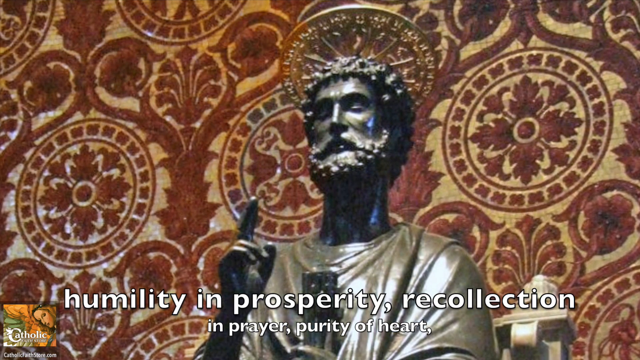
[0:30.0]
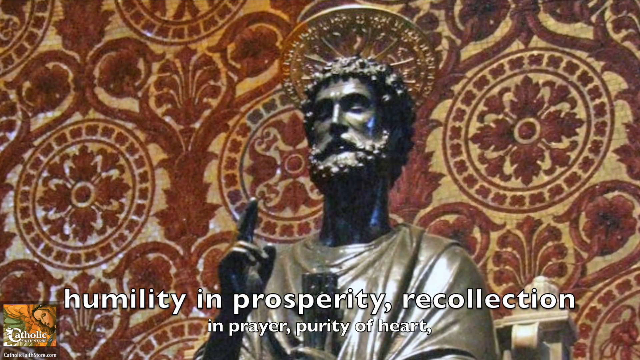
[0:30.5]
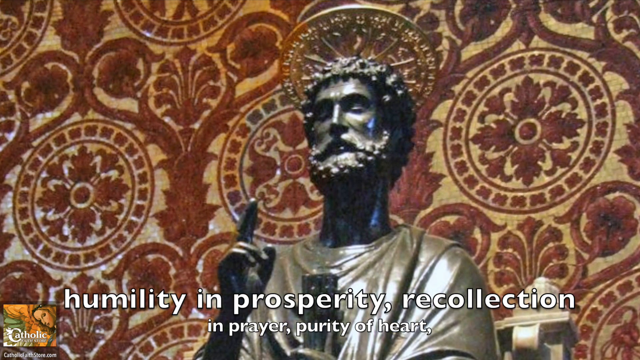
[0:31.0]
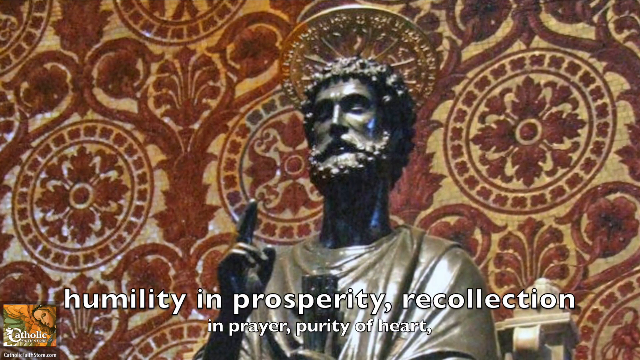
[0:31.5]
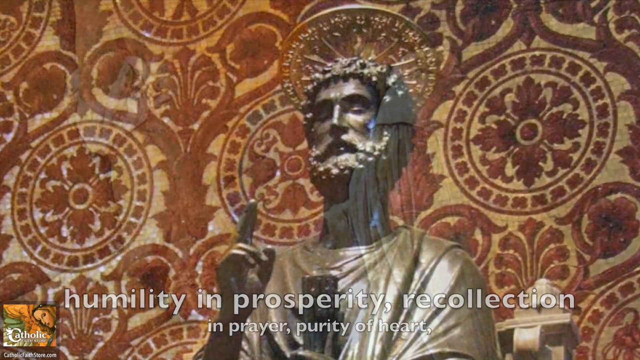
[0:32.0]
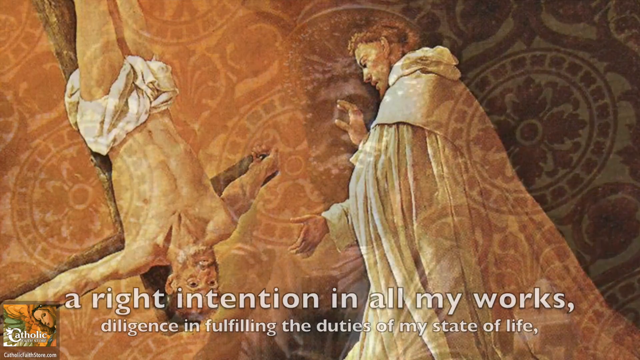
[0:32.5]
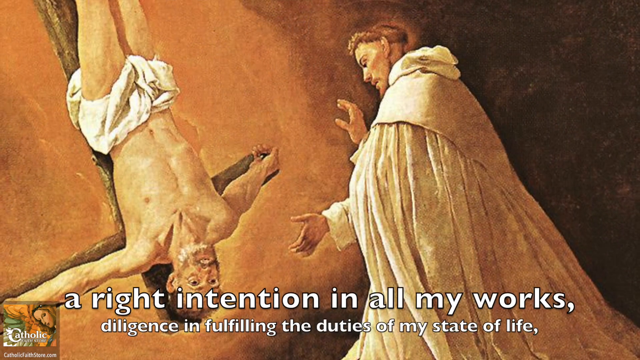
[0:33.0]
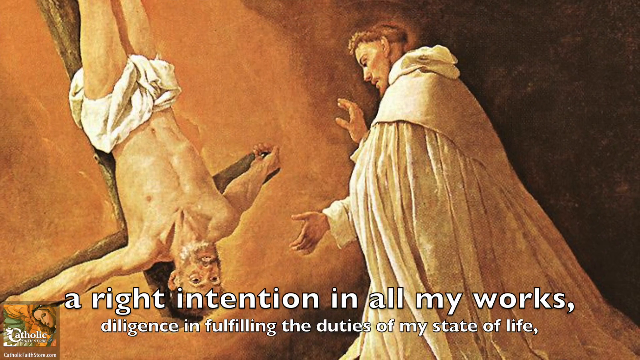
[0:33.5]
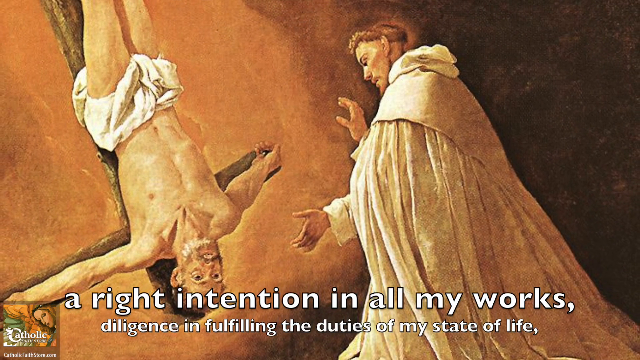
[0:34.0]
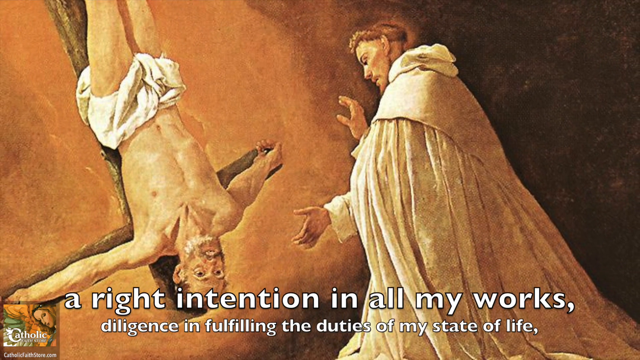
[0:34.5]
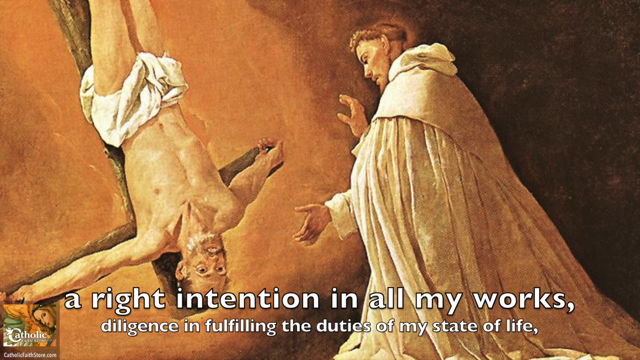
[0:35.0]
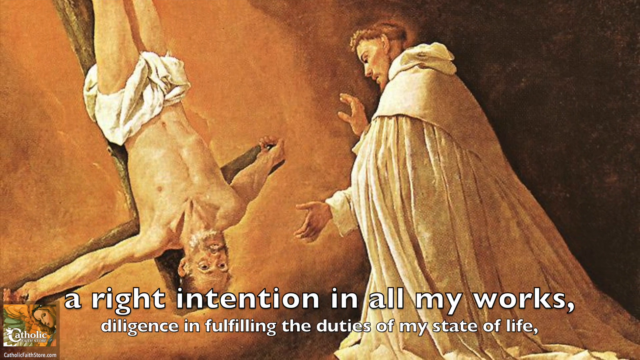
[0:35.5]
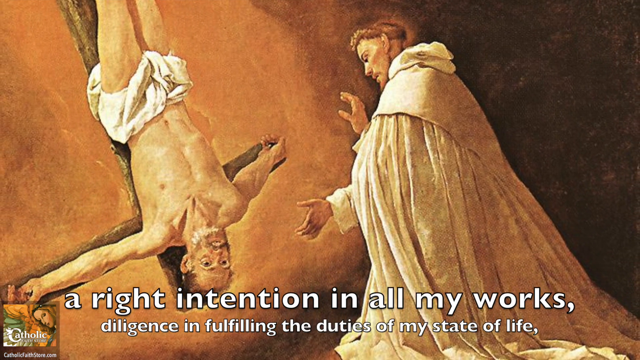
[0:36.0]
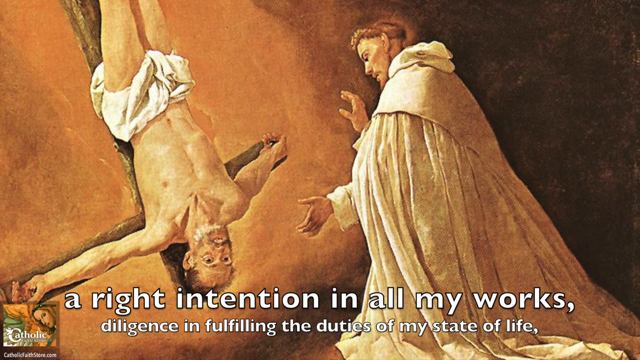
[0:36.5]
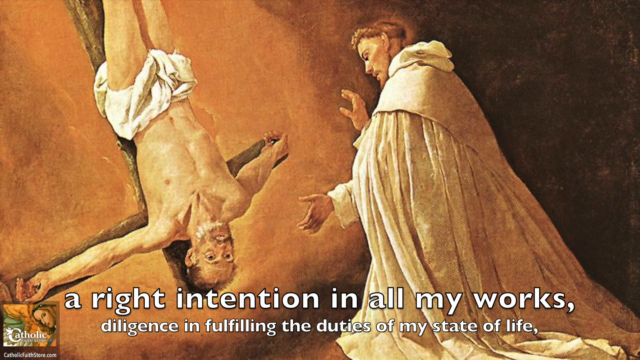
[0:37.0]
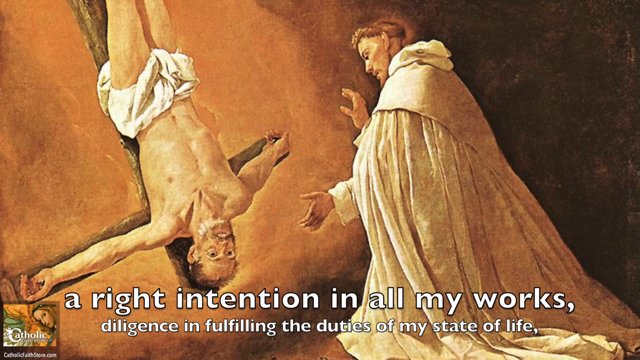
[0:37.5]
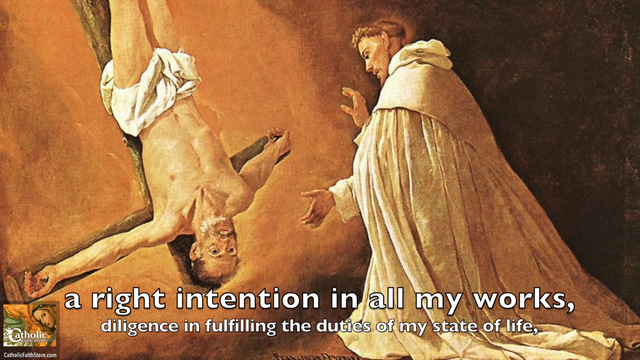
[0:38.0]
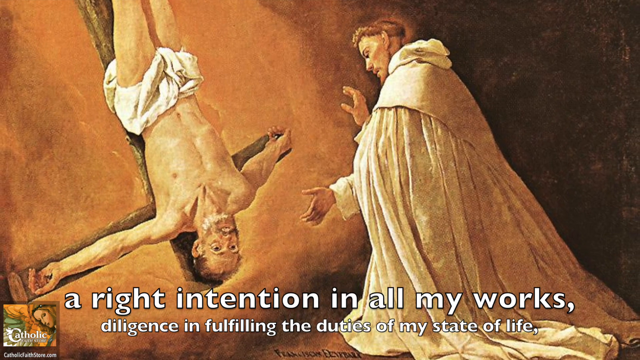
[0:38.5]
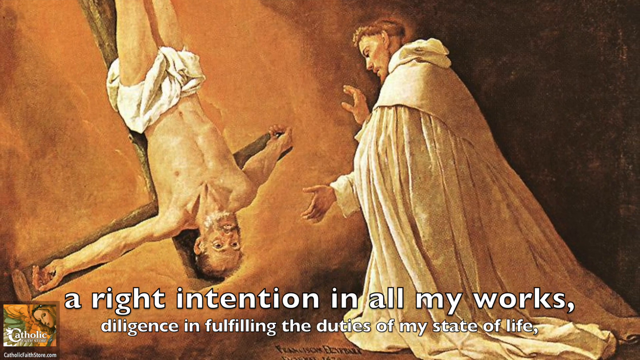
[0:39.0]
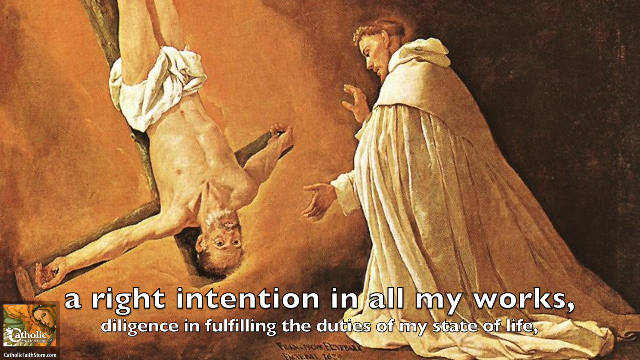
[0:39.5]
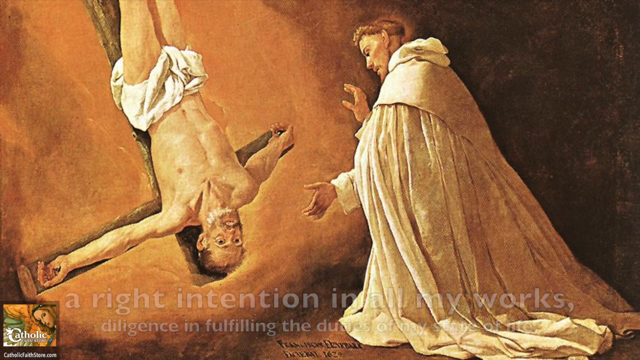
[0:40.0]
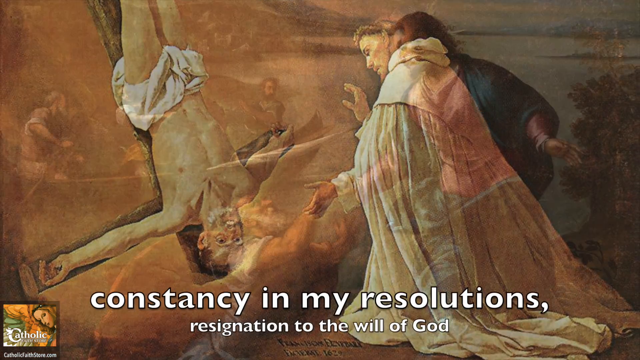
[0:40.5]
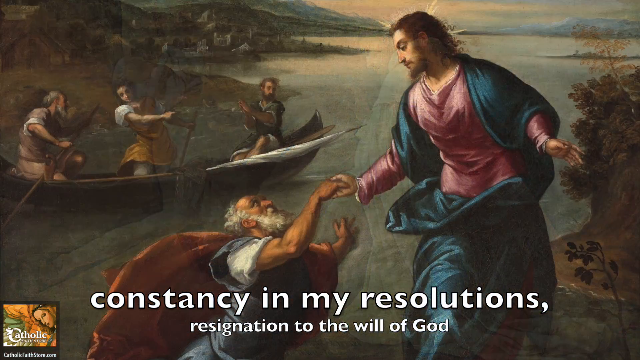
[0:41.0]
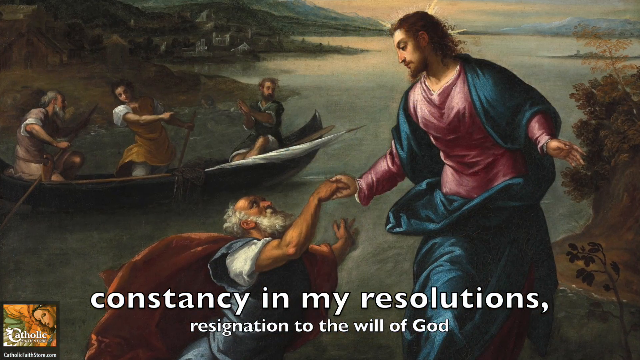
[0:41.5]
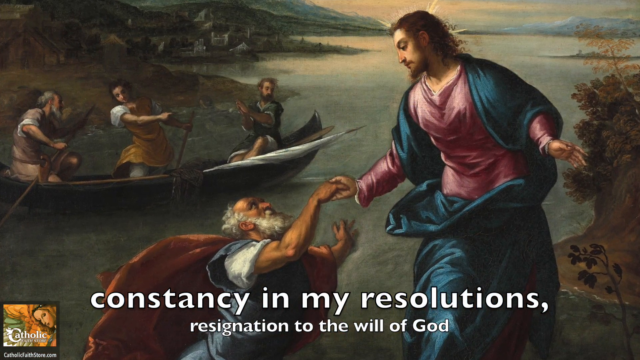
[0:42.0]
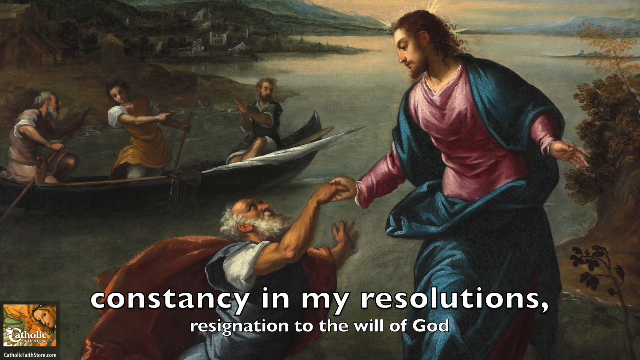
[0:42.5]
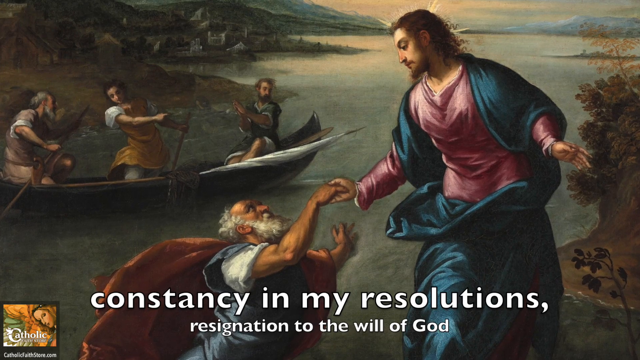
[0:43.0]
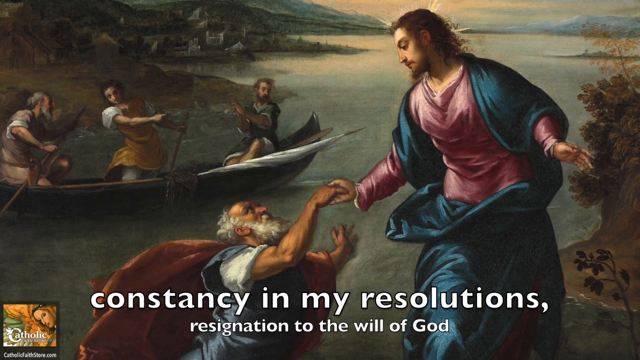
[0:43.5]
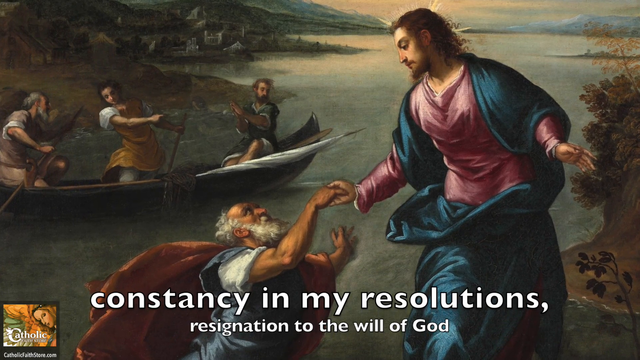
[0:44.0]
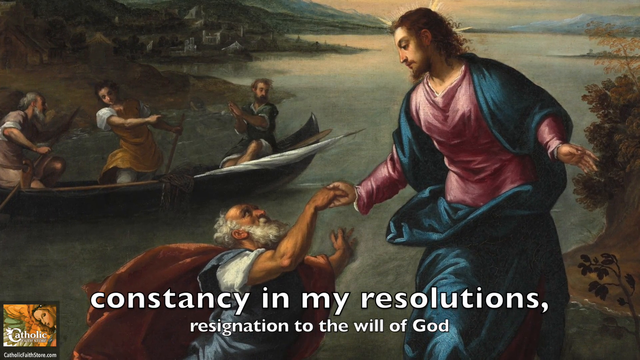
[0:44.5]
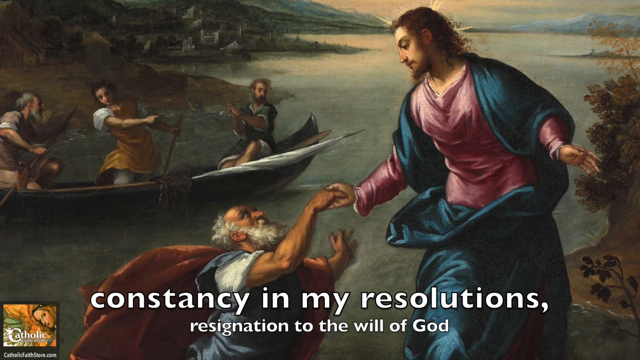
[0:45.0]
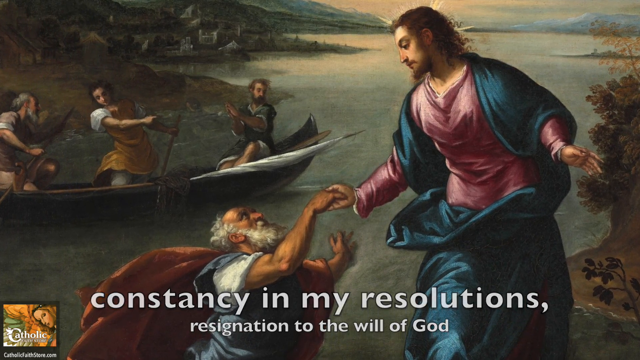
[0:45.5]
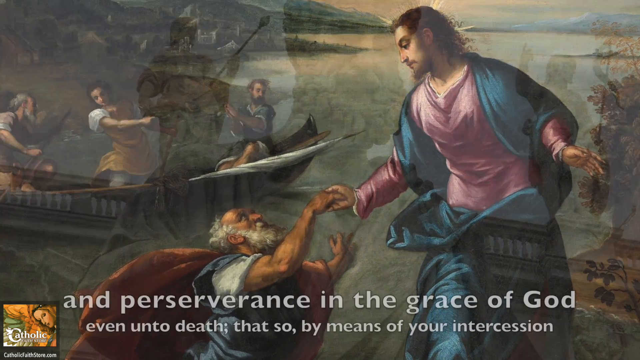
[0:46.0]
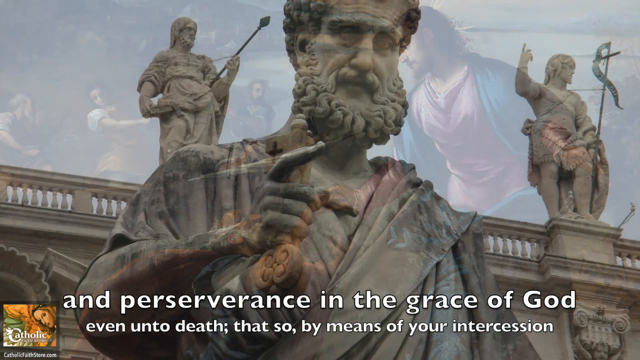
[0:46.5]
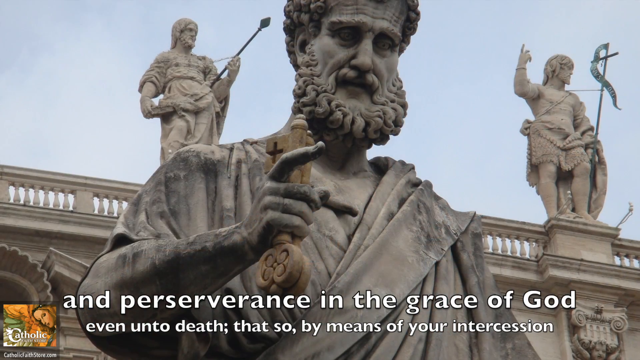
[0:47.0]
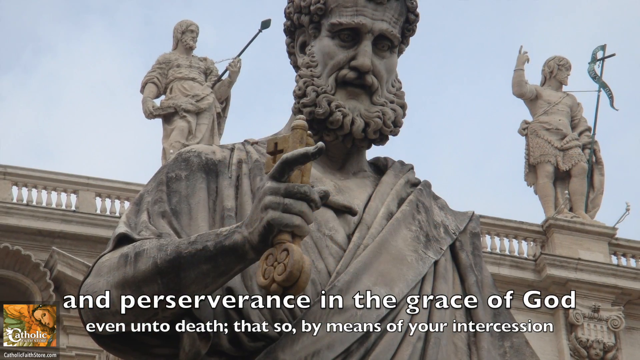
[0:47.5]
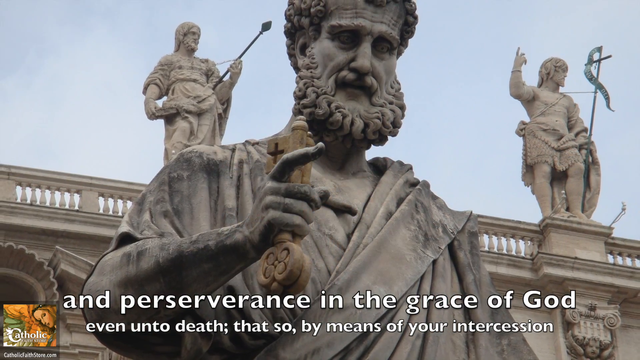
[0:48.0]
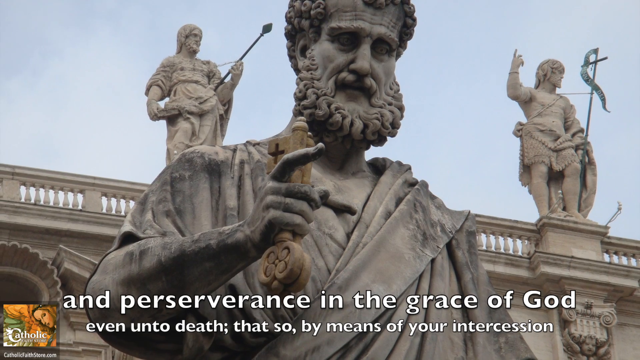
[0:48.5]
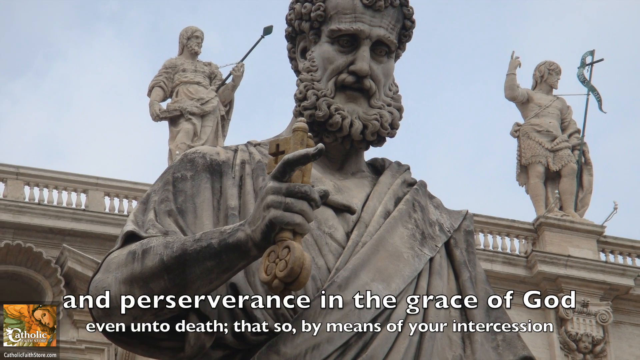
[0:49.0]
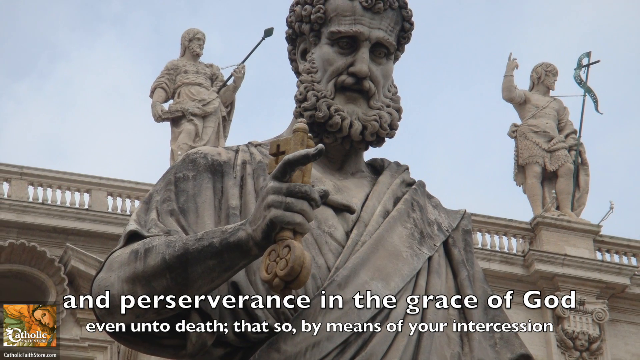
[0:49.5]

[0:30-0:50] What looks like a photograph of a statue appears. The statue is all bronze but looks dark because of the lighting. The figure holds up its right hand with the forefinger and middle finger straight up and the ring finger and pinky down, touching the thumb. The left hand is down at its side and not visible, and the figure looks like it is wearing a robe. The quote at the bottom reads, "Humility in prosperity, recollection in prayer, purity of heart." The image fades to another painting, with text reading, "A right intention in all my works, diligence in fulfilling the duties of my state of life." On the left, upside down, a man is nailed to a cross, wearing nothing but some white cloth wrapped around his waist; something goes through his hands to hold him to the cross. On the right is a man who looks like he is dressed as a priest, in long white flowing robes. He reaches his left hand sort of downward and out towards the crucified man's head and holds his right hand up just in front of his chest, palm facing the man, as if about to give him a blessing.